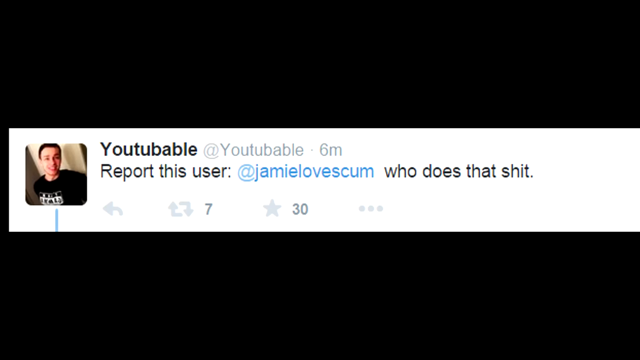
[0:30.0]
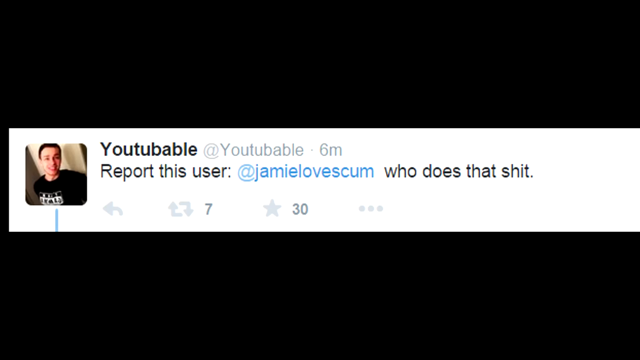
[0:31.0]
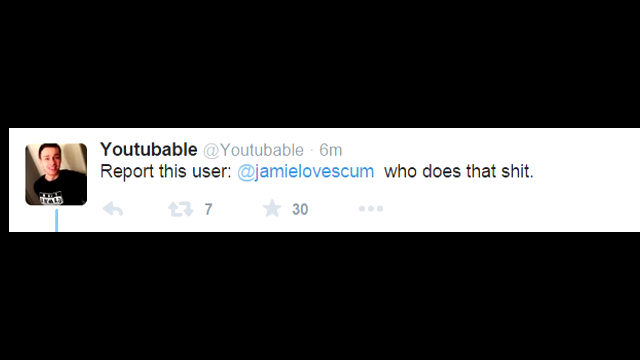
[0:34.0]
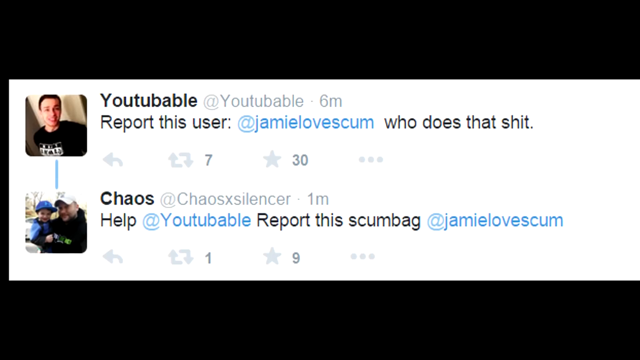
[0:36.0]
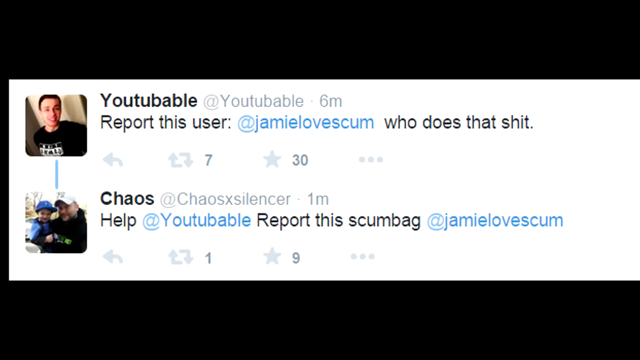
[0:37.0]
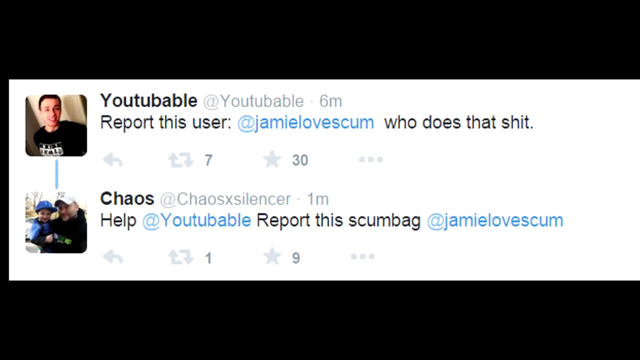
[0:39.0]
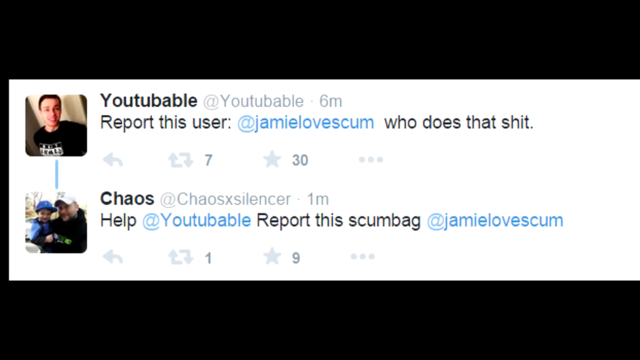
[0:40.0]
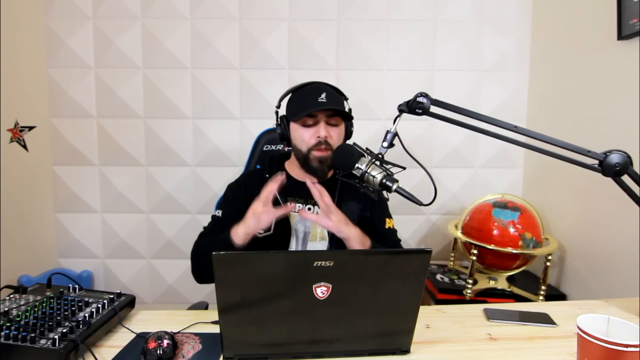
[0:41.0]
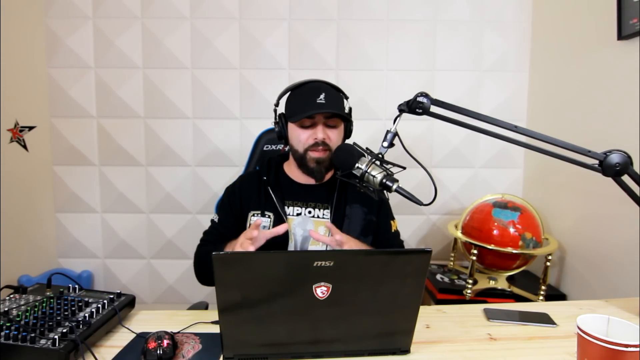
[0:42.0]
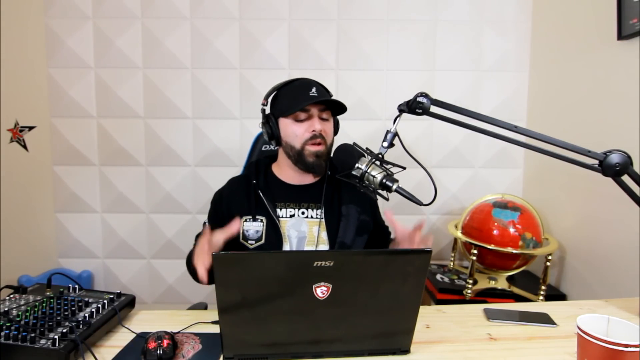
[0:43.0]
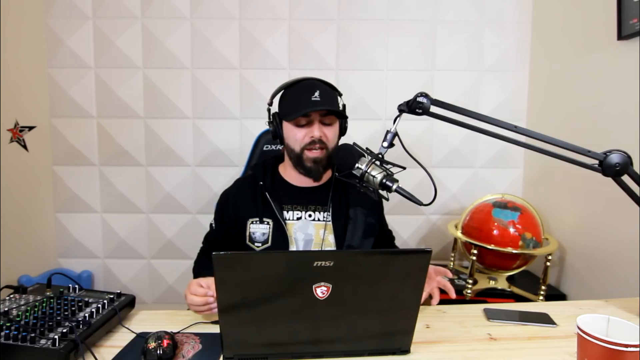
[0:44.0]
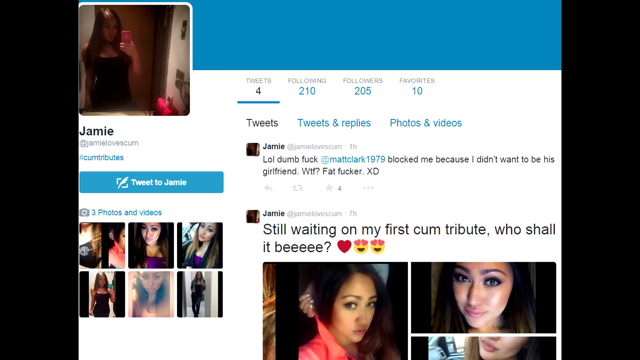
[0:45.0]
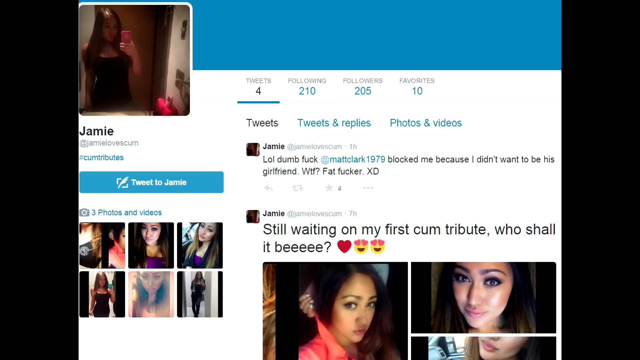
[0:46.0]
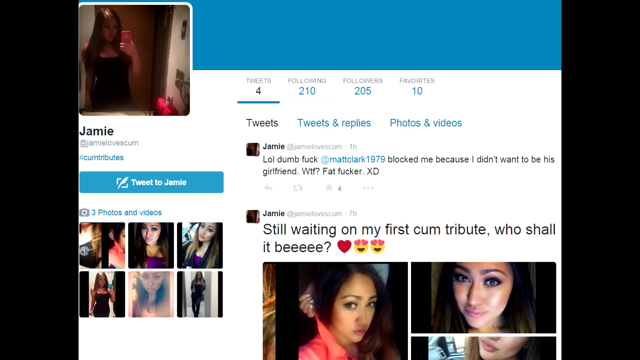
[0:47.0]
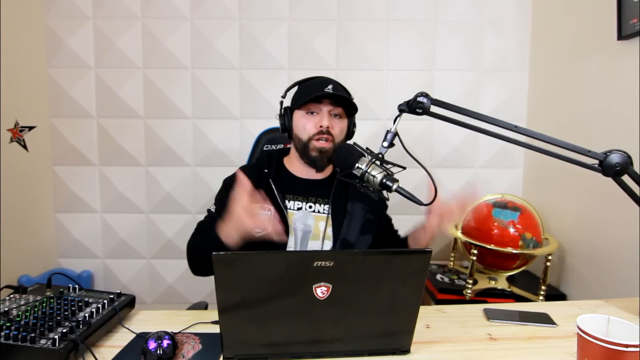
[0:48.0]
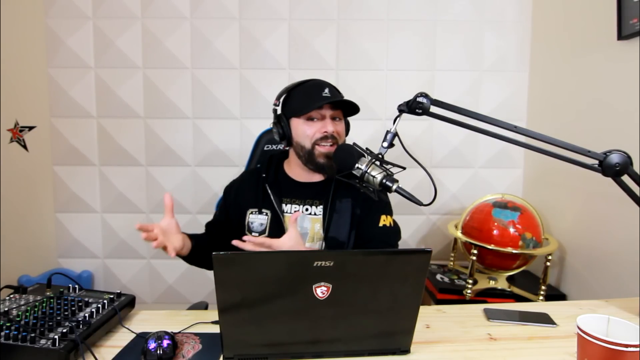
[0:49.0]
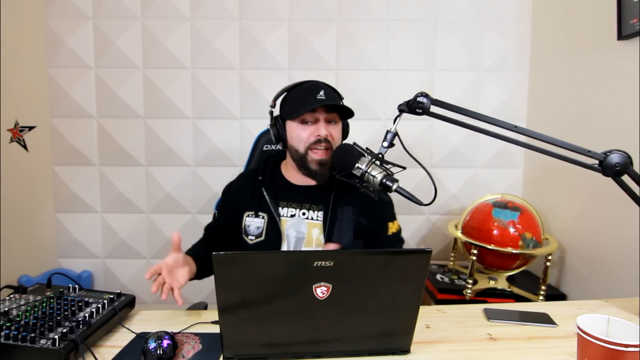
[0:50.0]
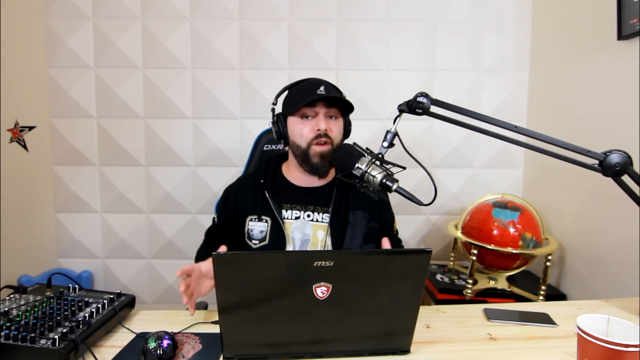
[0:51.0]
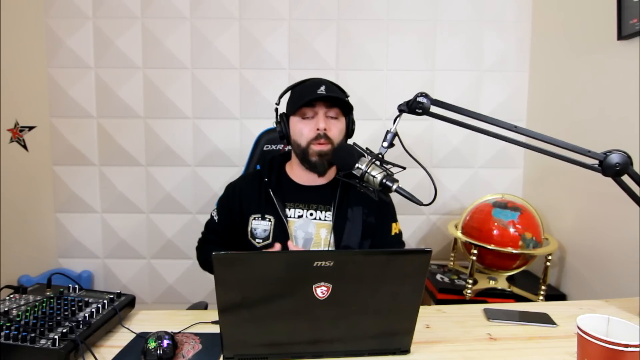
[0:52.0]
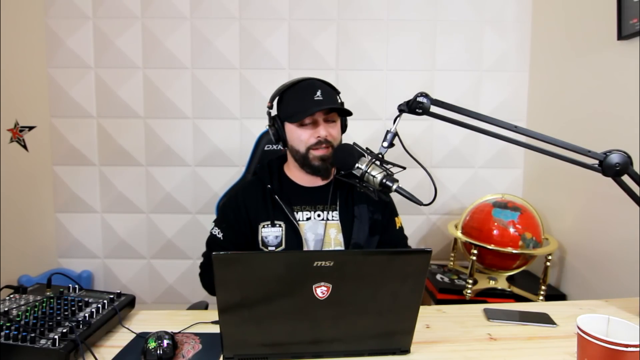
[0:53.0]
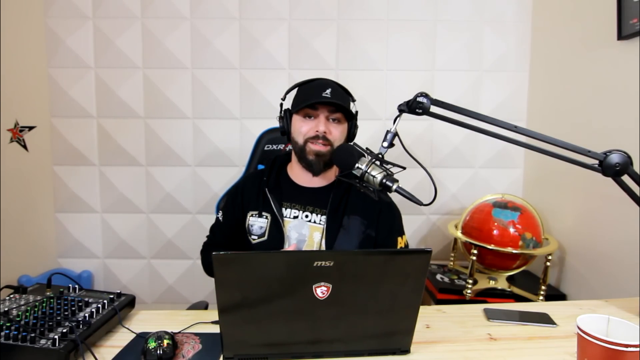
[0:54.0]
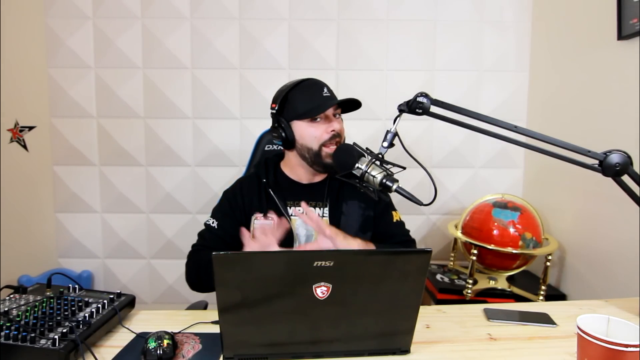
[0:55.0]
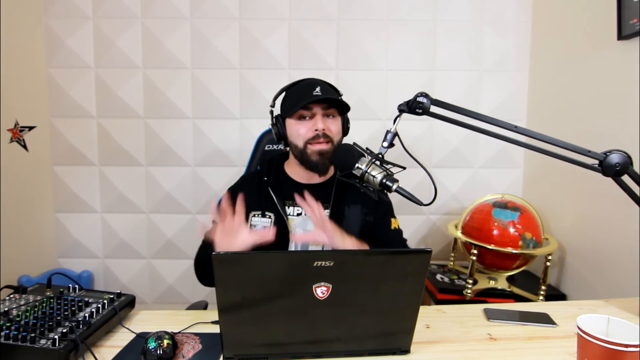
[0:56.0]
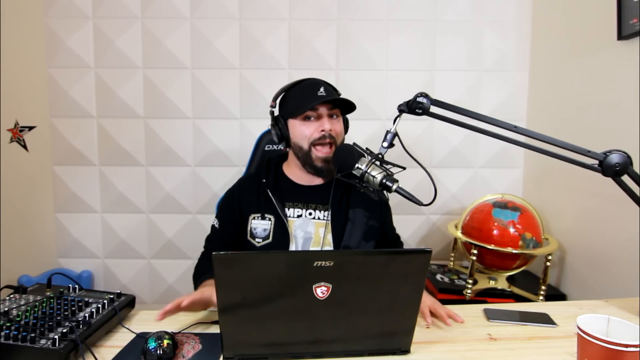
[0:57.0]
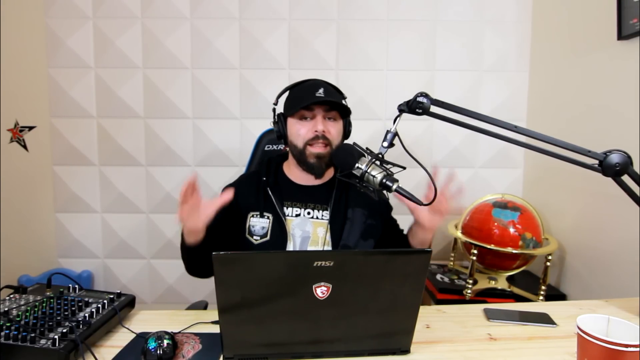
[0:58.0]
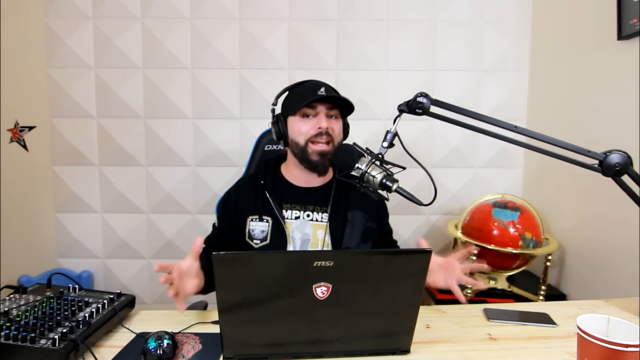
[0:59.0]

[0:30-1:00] A screenshot of a YouTube user's comment appears on a black background. The profile picture shows a man looking off to the right. The text reads "you tubable @you tubable six minutes report this user @Jamielovescum who does that shit". Below it there is an arrow pointing left, two arrows with the number seven, a star with the number thirty, and three dots. The view then opens up to another comment from a user named chaos, whose picture shows a man holding a small child; it reads "chaos @chaos X silencer", "one minute", and "help @you tubable report this scumbag @Jamielovescum". Then a screenshot of the person they want to report is shown.